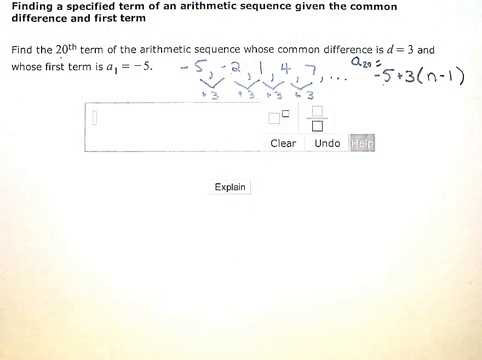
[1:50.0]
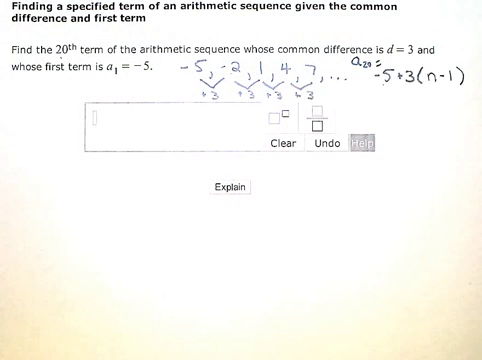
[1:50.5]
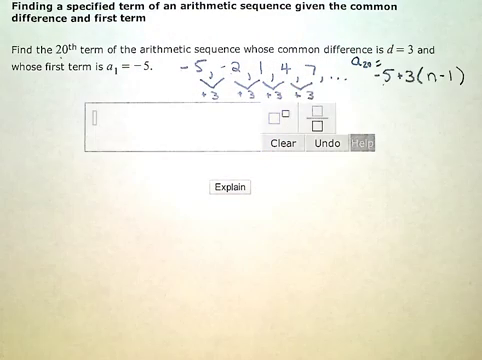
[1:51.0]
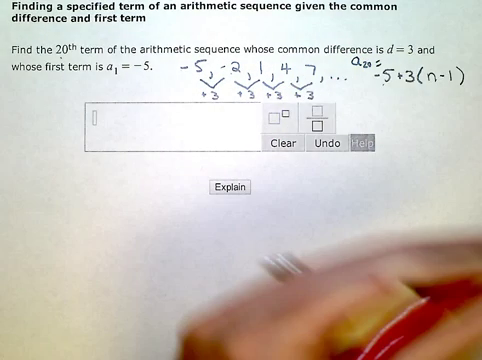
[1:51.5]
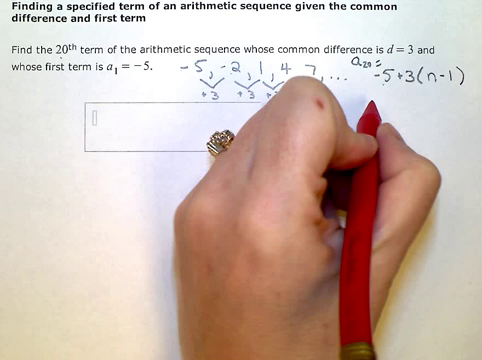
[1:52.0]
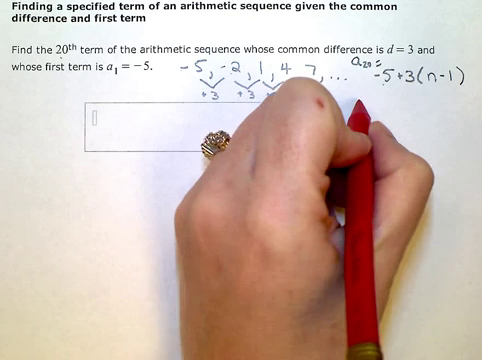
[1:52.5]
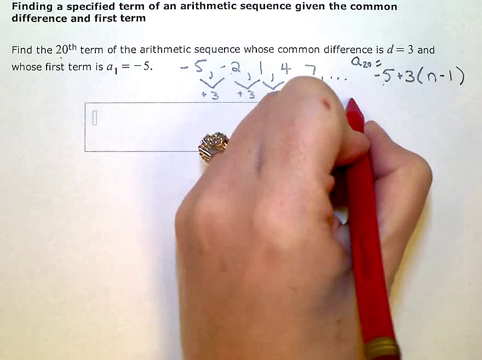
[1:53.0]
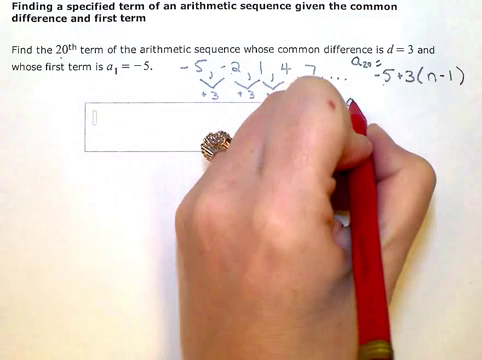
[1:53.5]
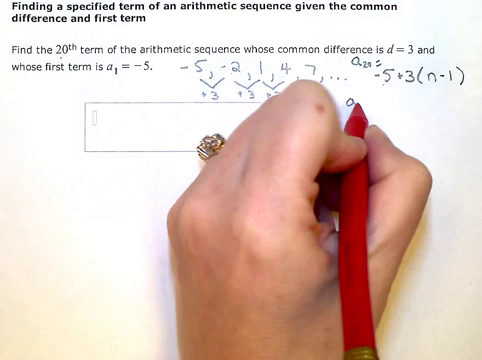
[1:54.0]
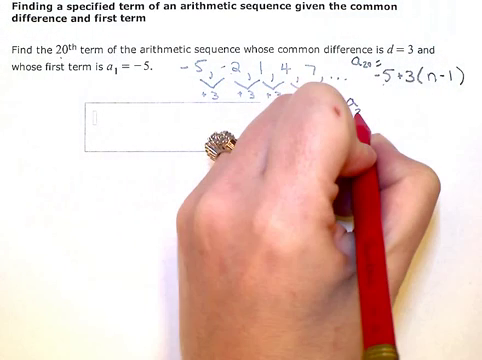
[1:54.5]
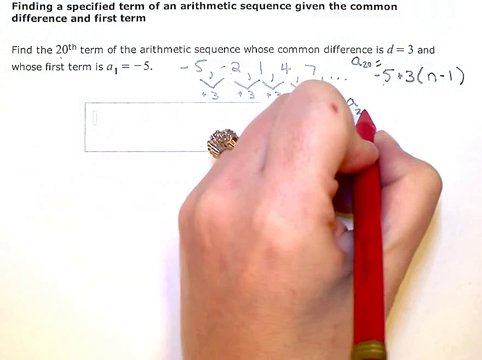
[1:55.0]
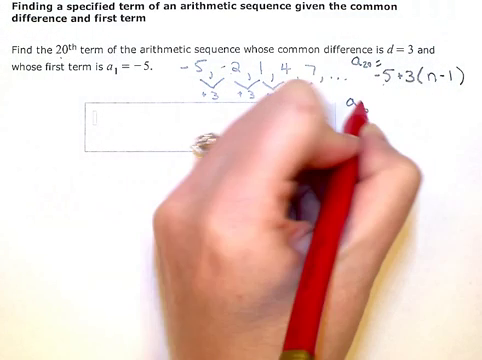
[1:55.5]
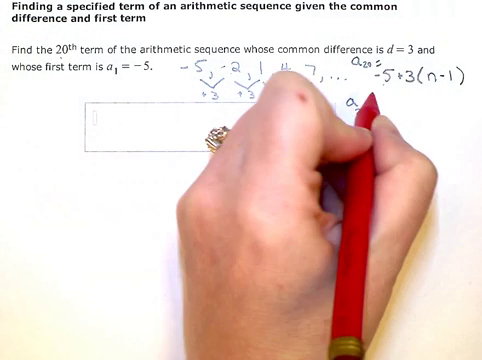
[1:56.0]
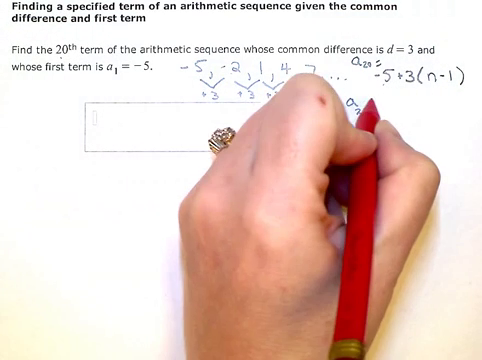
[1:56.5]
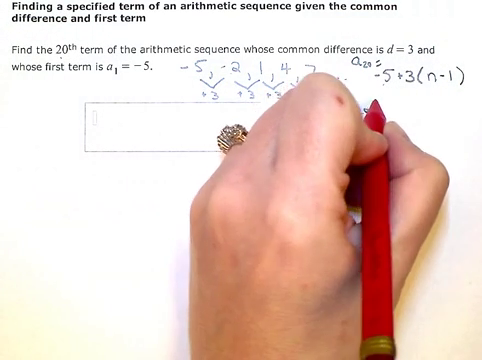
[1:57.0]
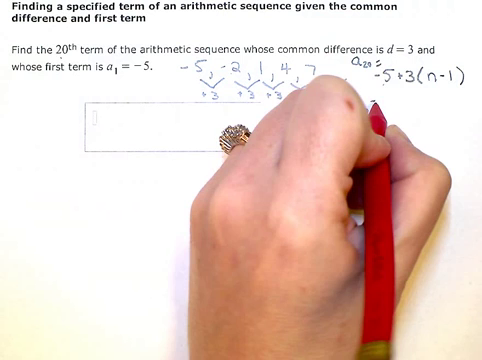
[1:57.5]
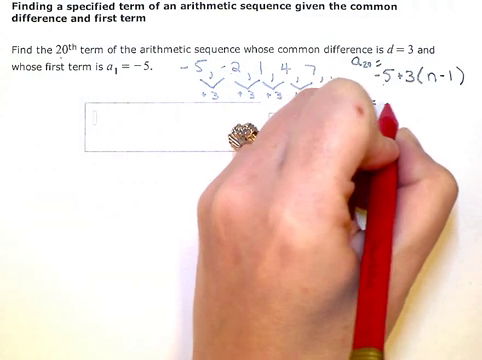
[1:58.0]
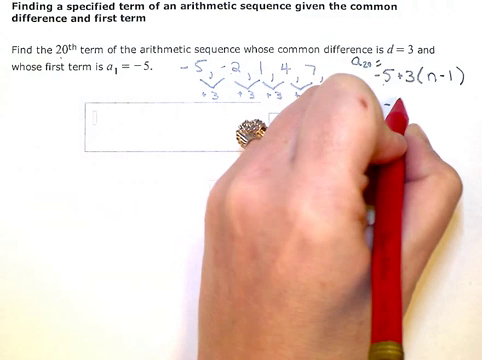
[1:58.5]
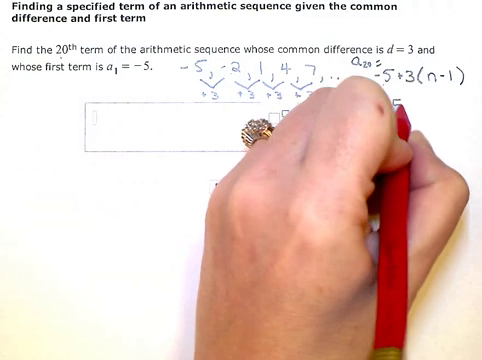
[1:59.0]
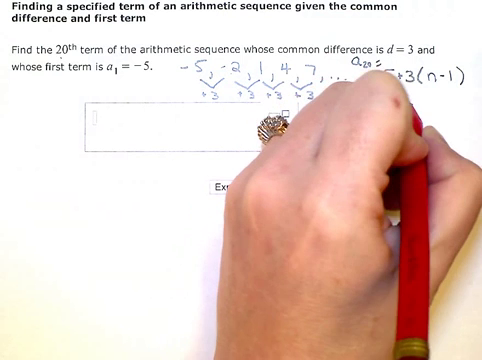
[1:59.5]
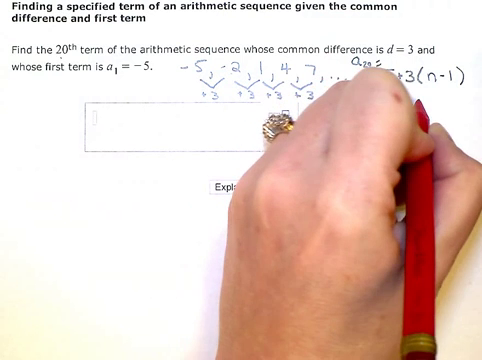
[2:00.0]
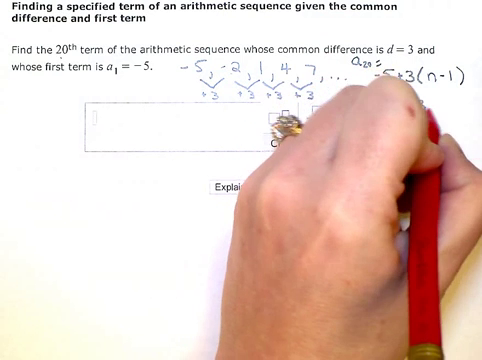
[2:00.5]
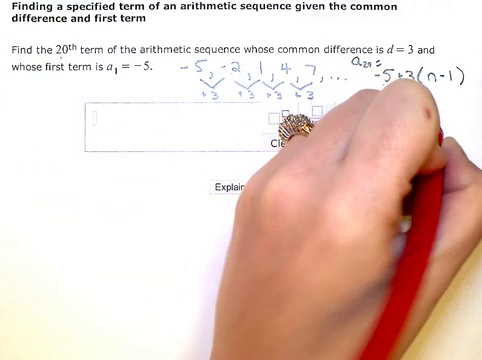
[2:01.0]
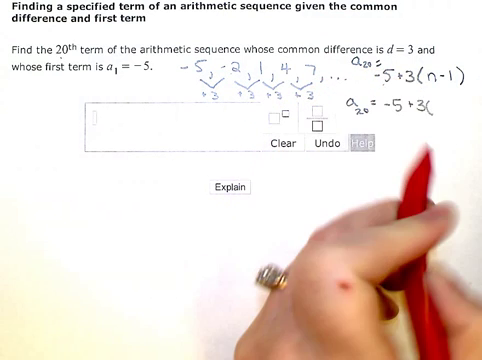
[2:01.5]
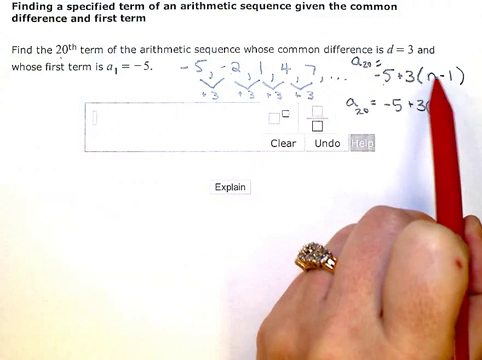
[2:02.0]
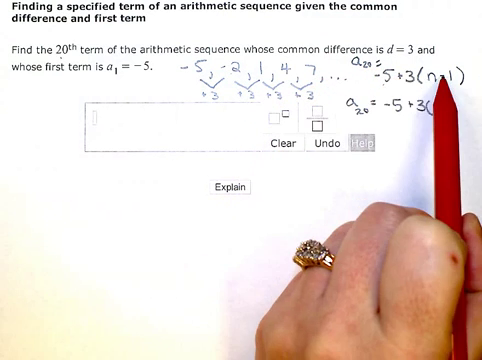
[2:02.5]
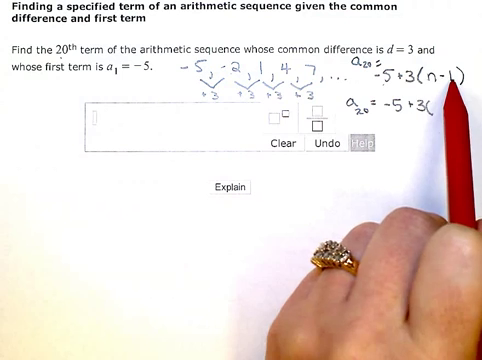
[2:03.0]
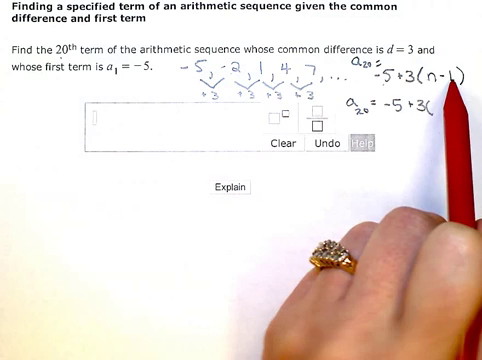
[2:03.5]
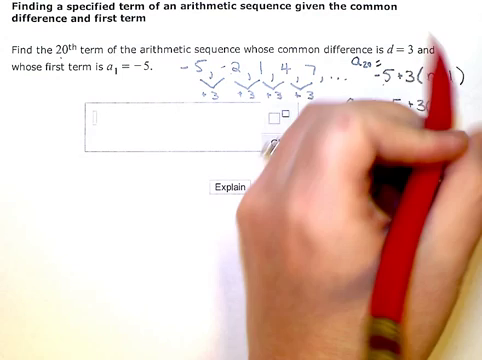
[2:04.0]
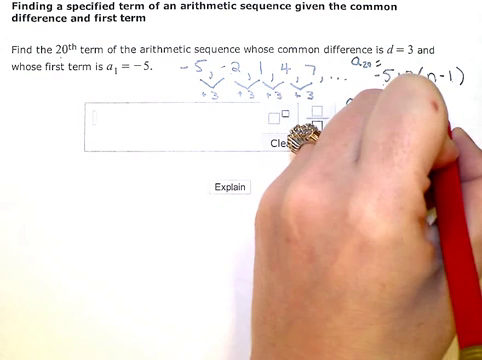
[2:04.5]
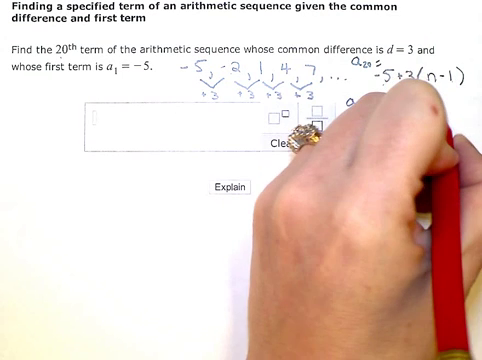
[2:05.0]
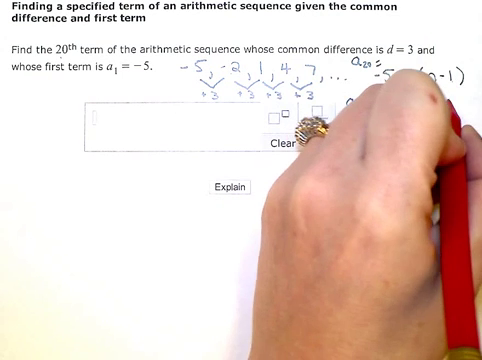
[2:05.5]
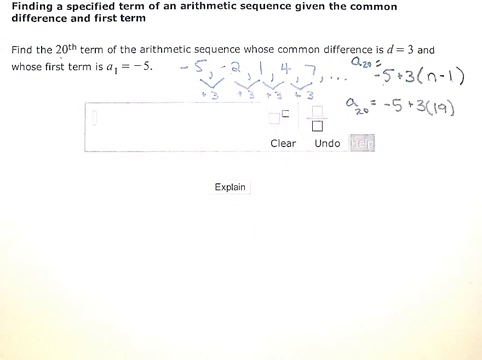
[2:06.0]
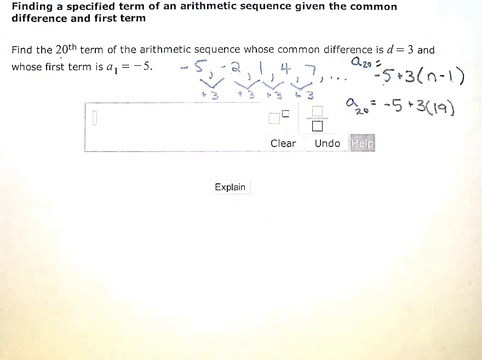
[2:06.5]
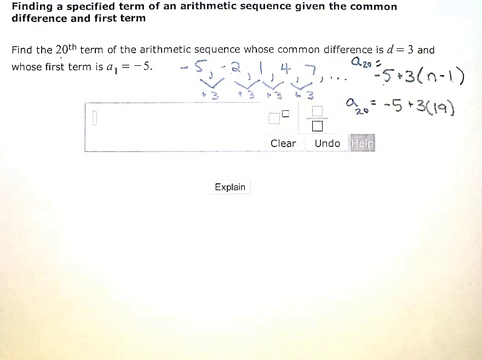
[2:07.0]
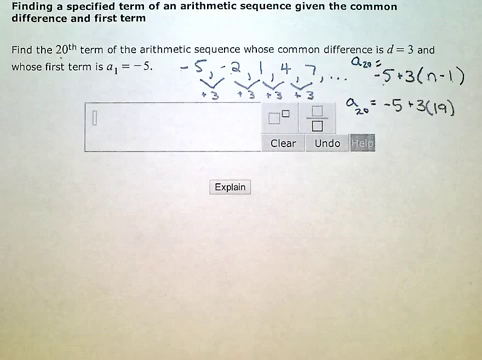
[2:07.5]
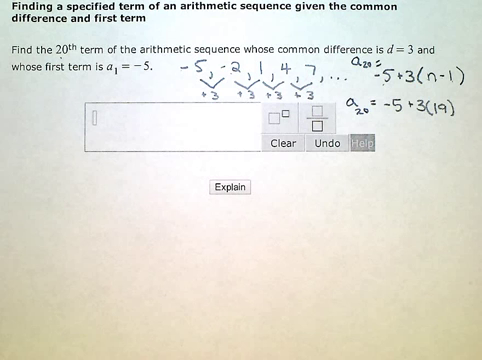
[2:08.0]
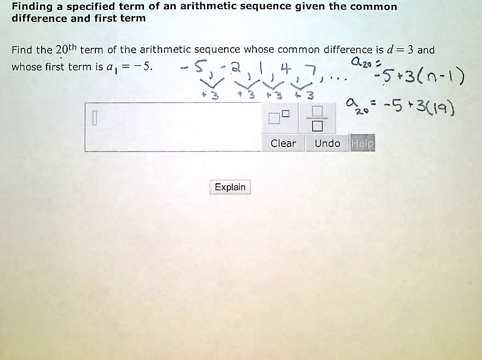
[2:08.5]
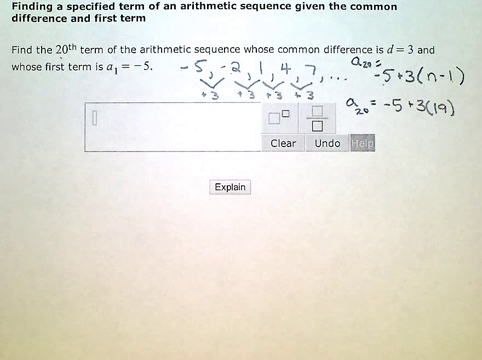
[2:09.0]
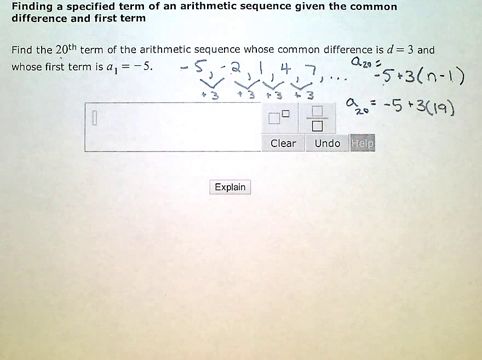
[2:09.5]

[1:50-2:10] The heading and the question about the twentieth term with d = 3 and a1 = -5 remain on screen. She has already written -5, -2, 1, 4, 7 and -5 + 3(n - 1). Now she writes a20 = -5 + 3(19) below the equation above it, which begins a20 = -5 + 3 with parentheses. She seems to work out the equation directly on the paper without any problem, writing it out completely.